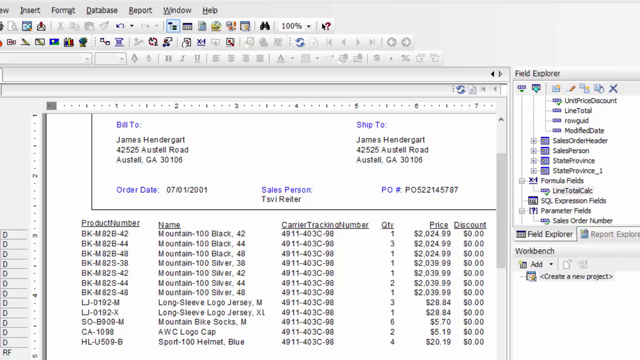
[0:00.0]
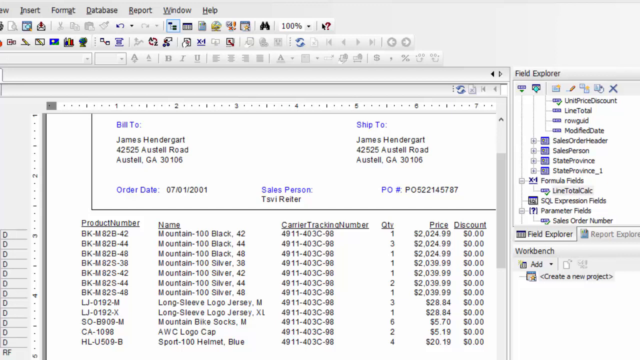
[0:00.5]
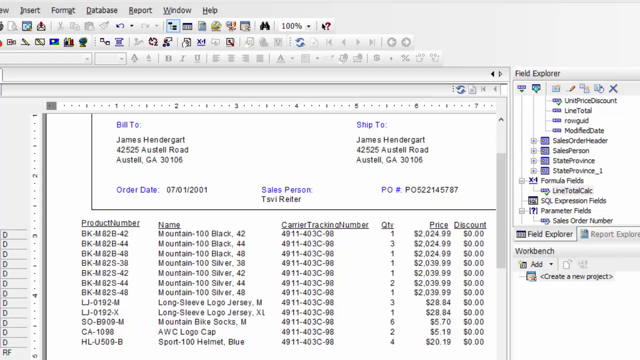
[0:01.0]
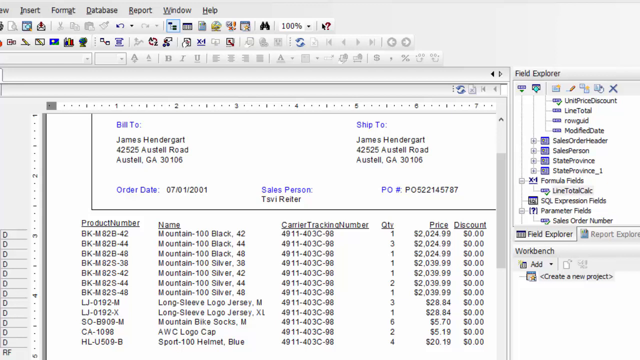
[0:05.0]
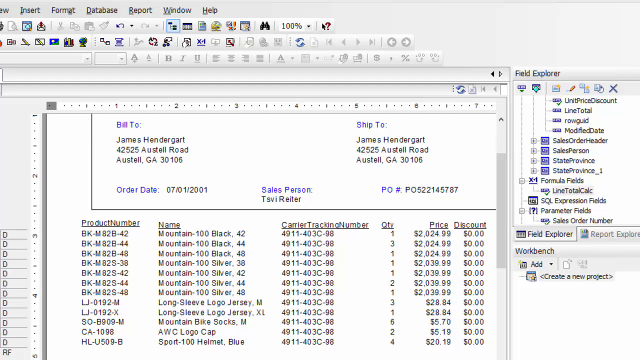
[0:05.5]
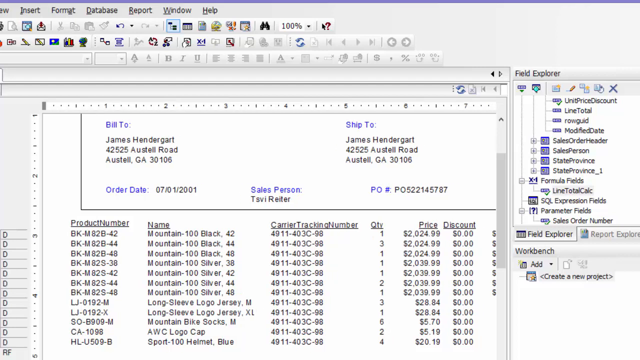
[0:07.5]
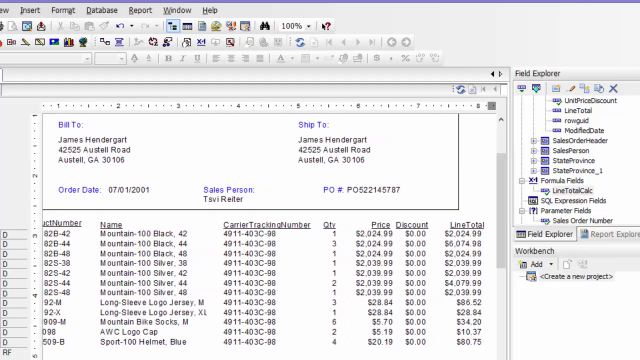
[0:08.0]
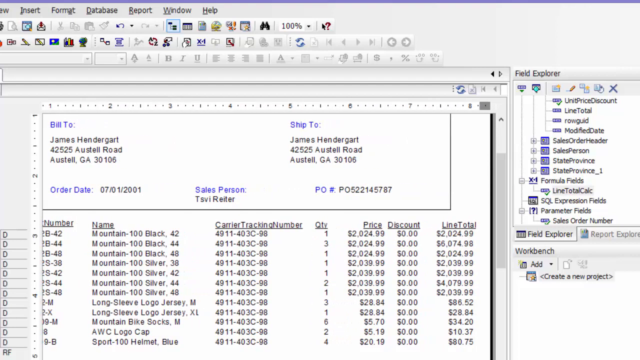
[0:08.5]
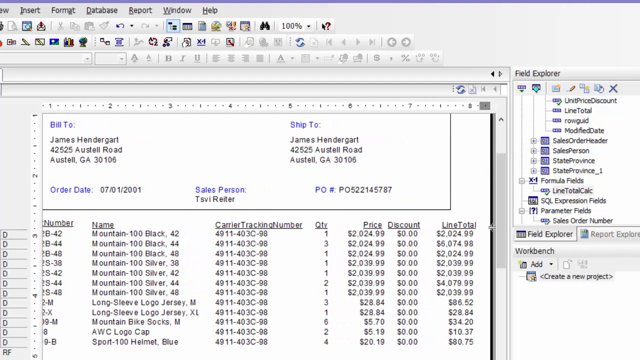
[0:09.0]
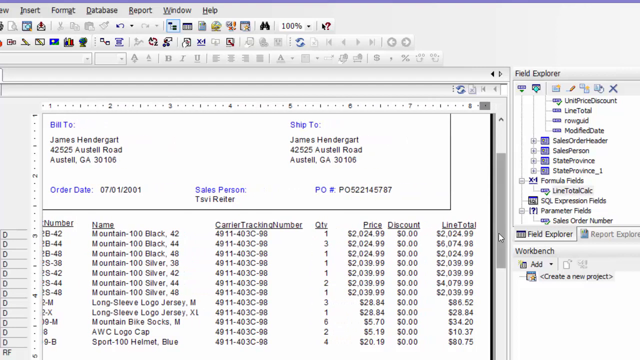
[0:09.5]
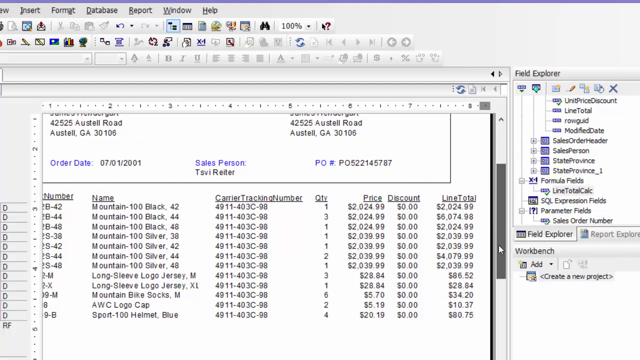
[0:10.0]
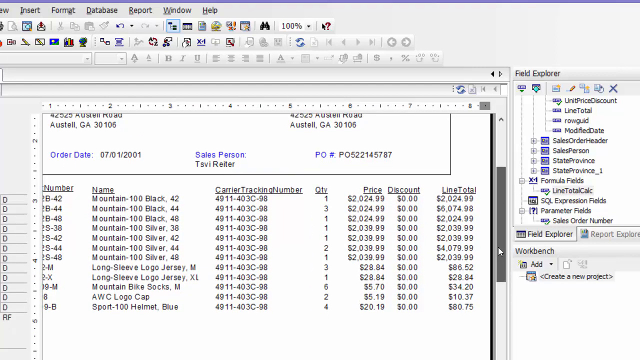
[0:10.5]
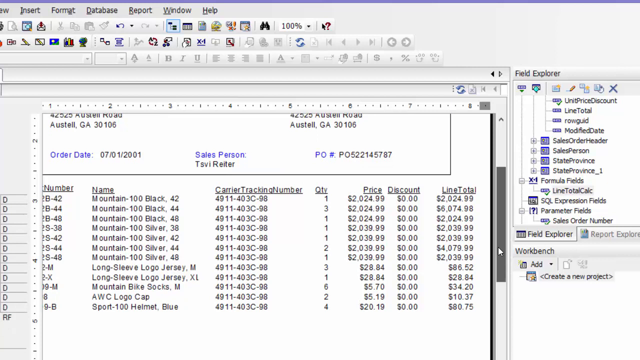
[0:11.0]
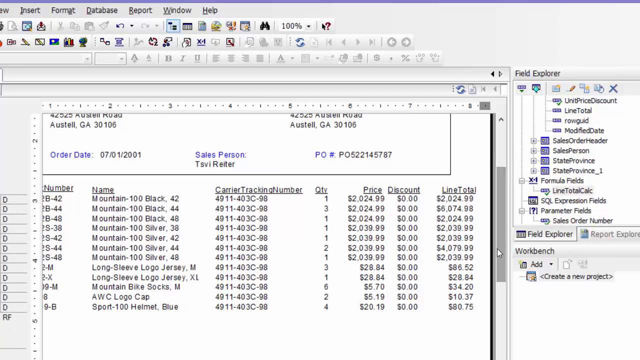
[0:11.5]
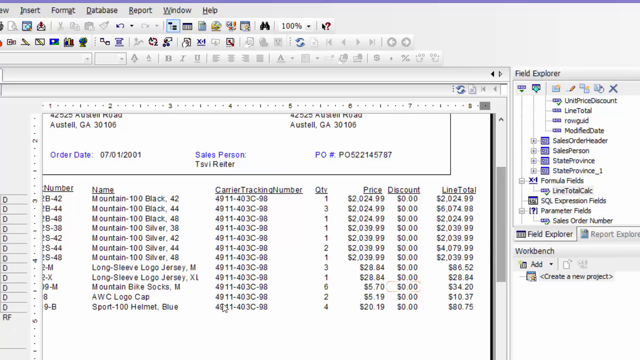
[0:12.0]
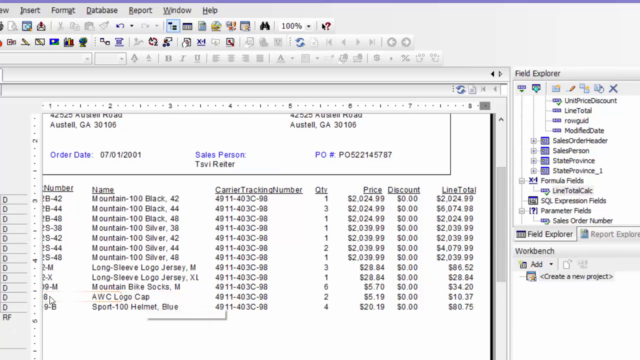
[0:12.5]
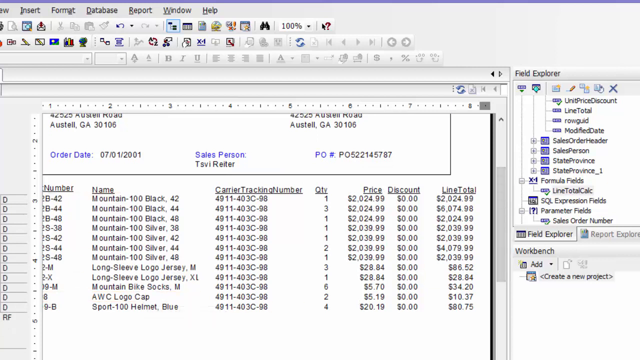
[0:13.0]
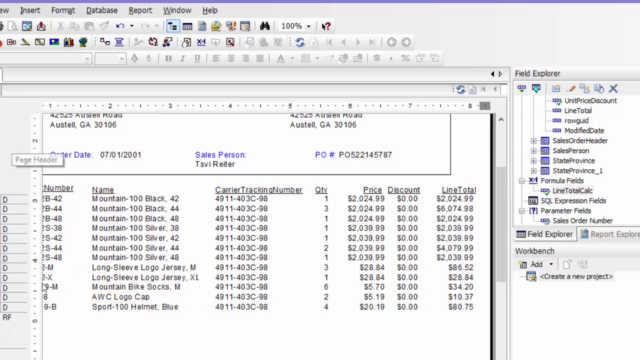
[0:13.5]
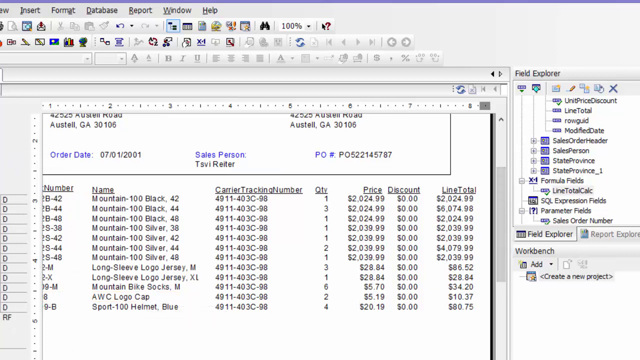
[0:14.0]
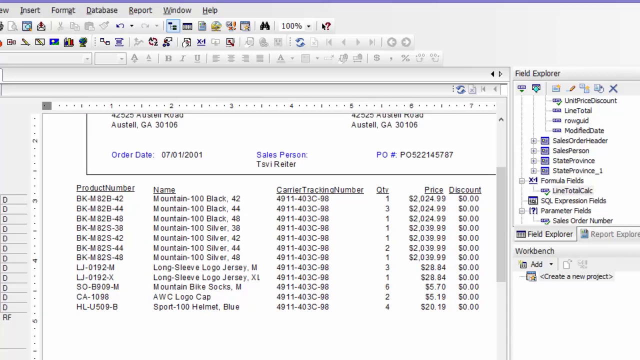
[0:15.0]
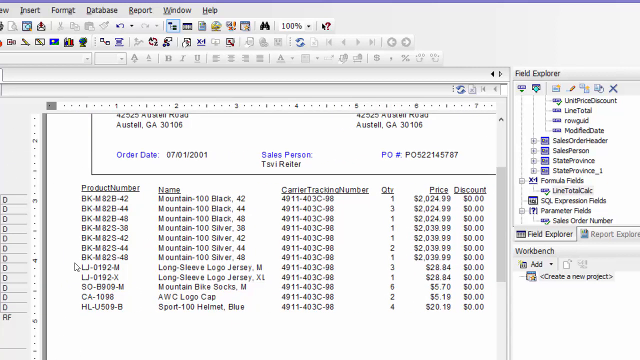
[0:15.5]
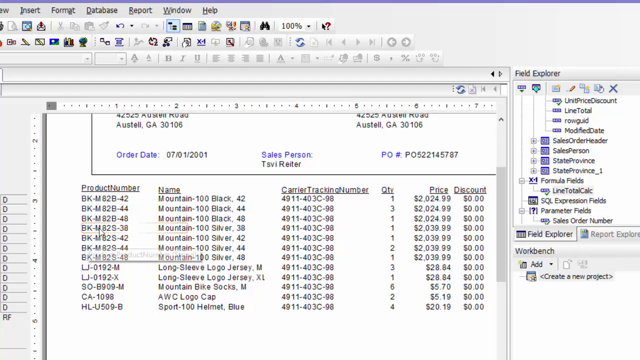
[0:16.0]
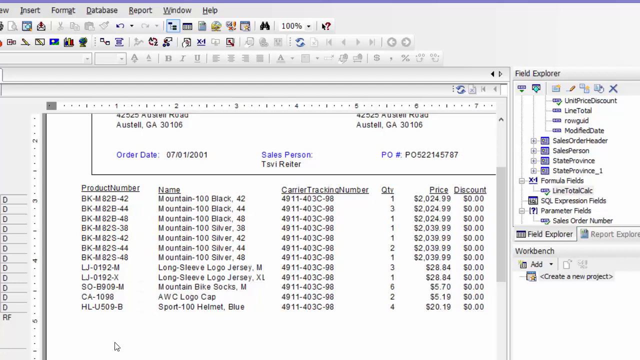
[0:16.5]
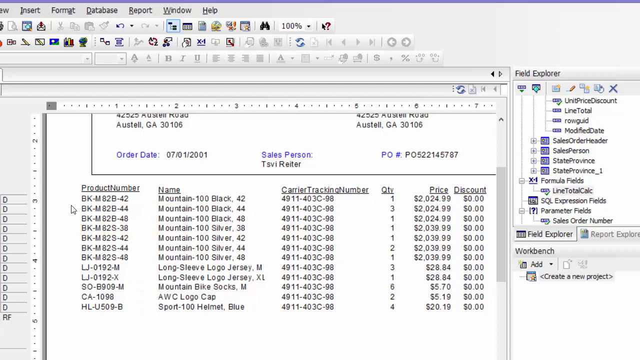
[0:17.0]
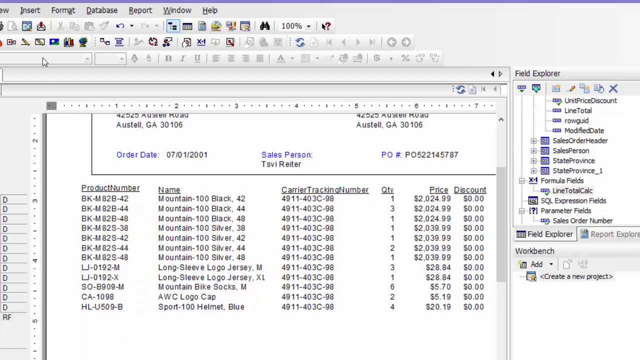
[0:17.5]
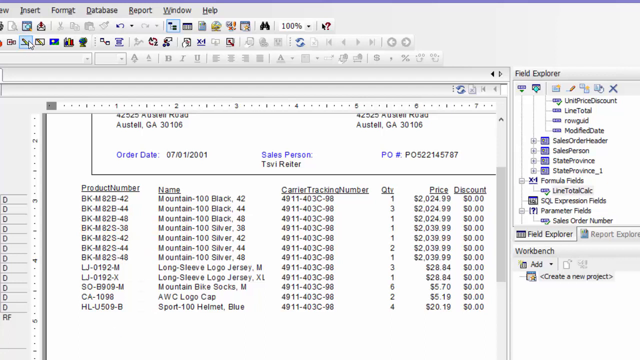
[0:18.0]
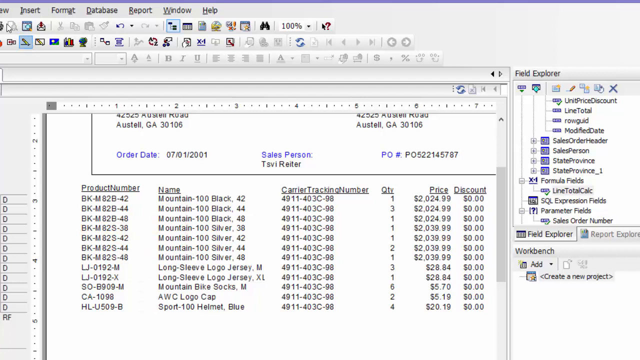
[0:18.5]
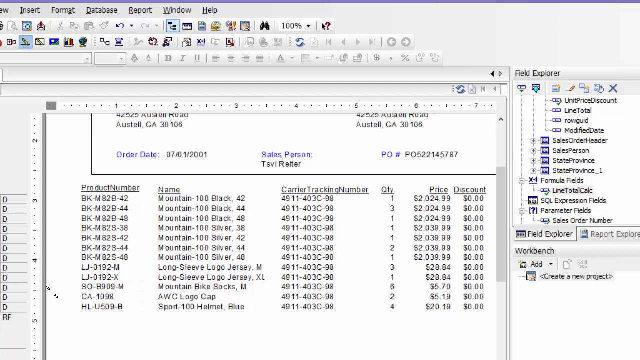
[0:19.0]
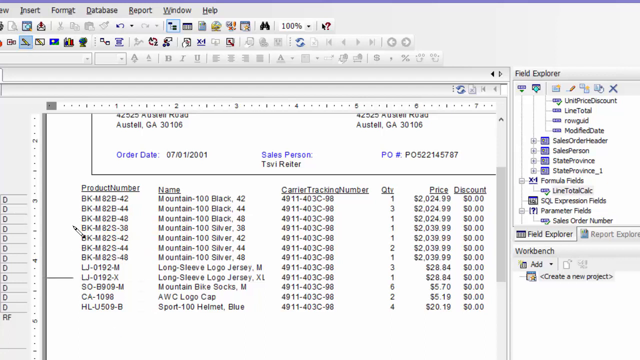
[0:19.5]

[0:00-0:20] What appears to be a Word document is open, with the usual menu items across the top: view, insert, format, database, report and window. Underneath are various clickable colored items: one with a magnifying glass, one with an arrow pointing down, and a revert icon that looks like a curved line going into the document. The document looks like some kind of invoice printout. It says "bill to", and underneath is a name starting with James and an address, along with city, state and zip code spaced out. It also shows the order date, salesperson and PO number. There is a ruler at the top and one on the left, numbered 1 through 7. On the right is a field explorer with a number of drop-down plus items that expand when clicked; some of them include unit price, discount, sales order header and salesperson. Above that are options such as a cancel X mark and a pencil mark. The whole document briefly glitches and comes back before it scrolls right. Underneath the order date, the columns include product number, name, carrier tracking, quantity, price, discount and line total. The view scrolls down a little more, and the cursor moves up to a number and rests there for a second, bringing up a little caption box that shows what it is. The view then scrolls a little to the left to the entry "BKM82S-42". The user clicks at the top, apparently on the pencil mark, and the cursor turns into a pencil icon.